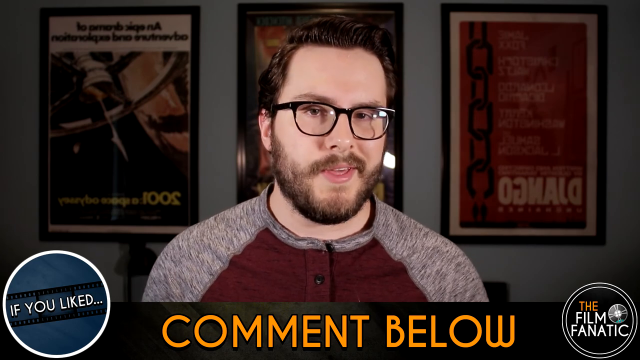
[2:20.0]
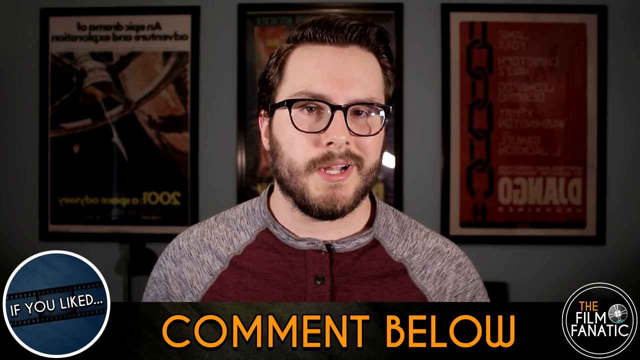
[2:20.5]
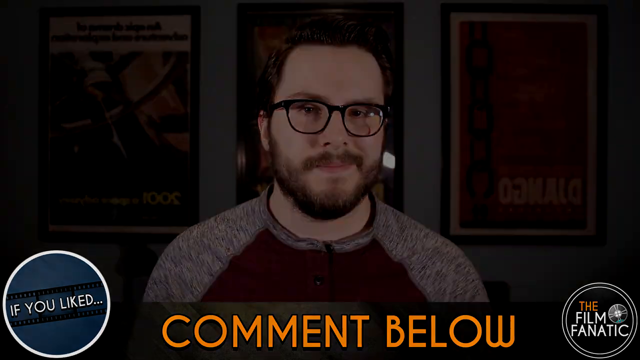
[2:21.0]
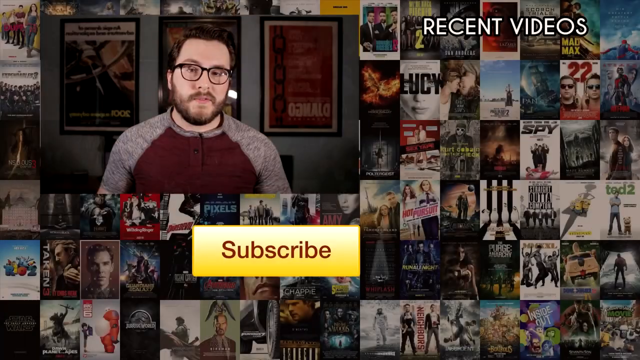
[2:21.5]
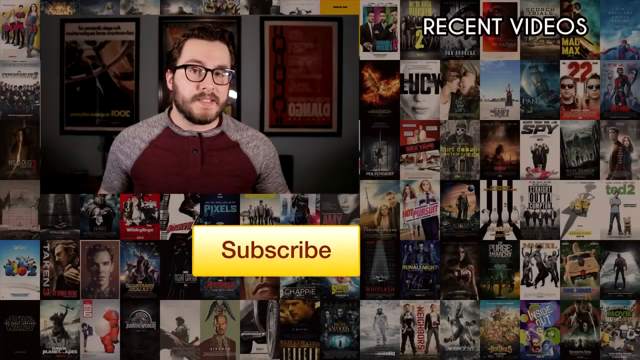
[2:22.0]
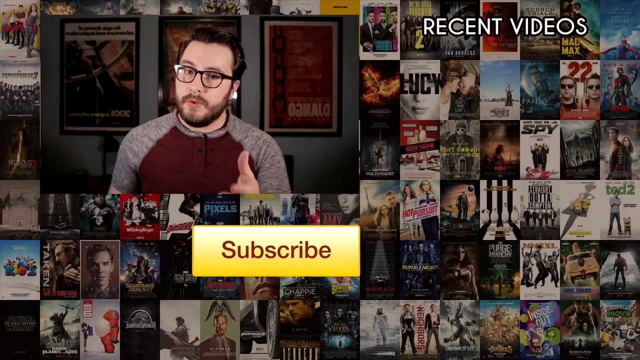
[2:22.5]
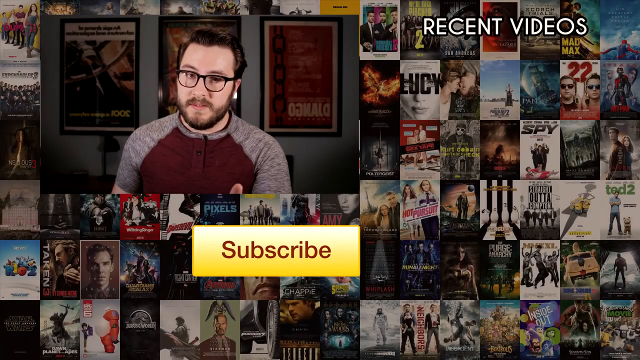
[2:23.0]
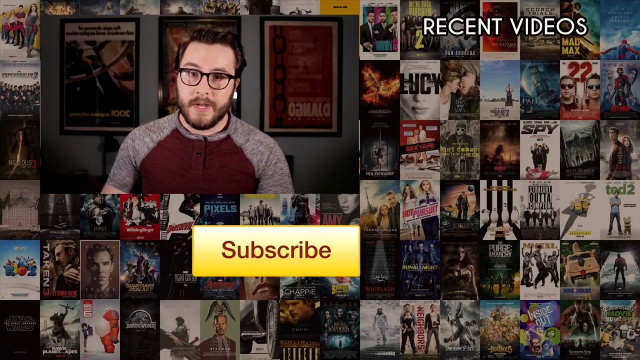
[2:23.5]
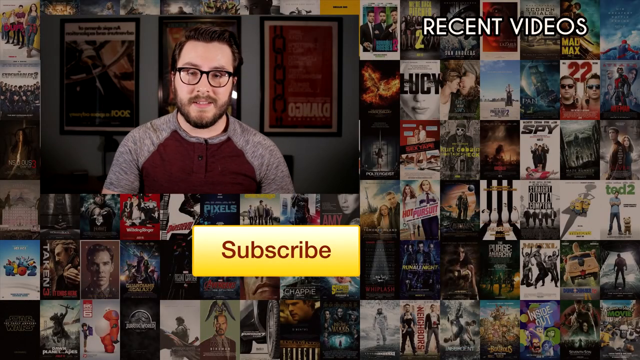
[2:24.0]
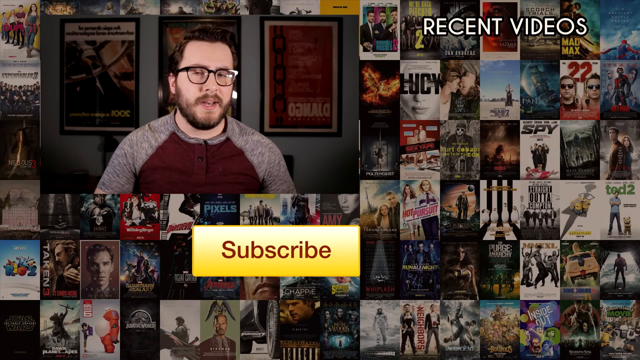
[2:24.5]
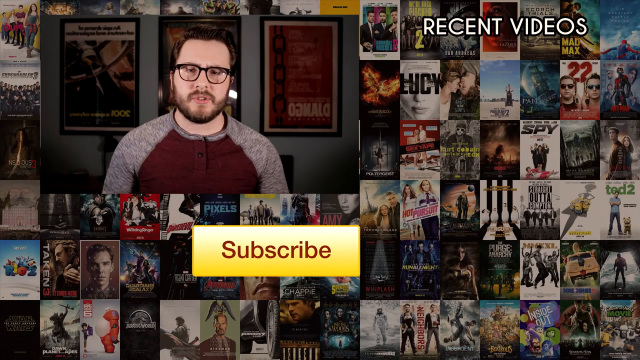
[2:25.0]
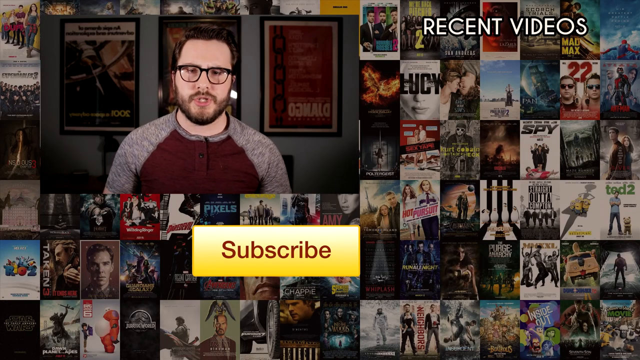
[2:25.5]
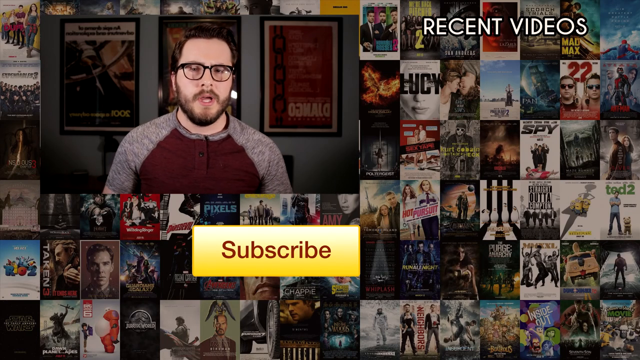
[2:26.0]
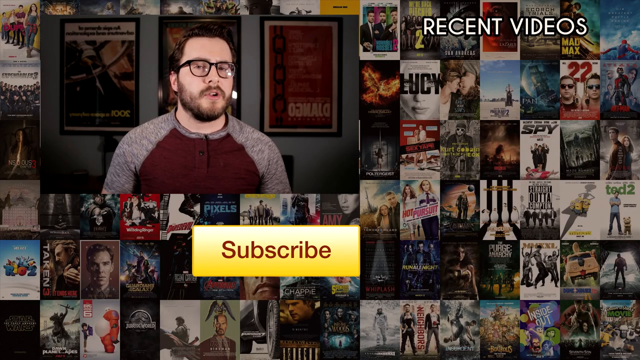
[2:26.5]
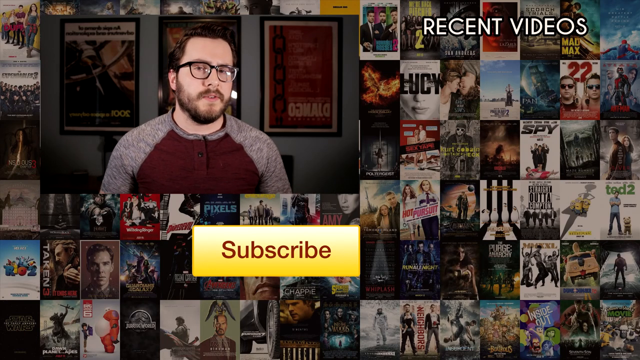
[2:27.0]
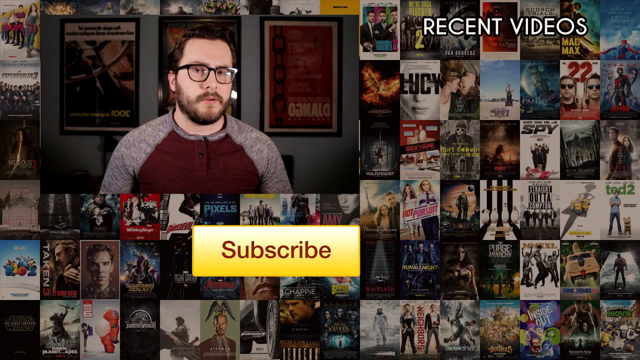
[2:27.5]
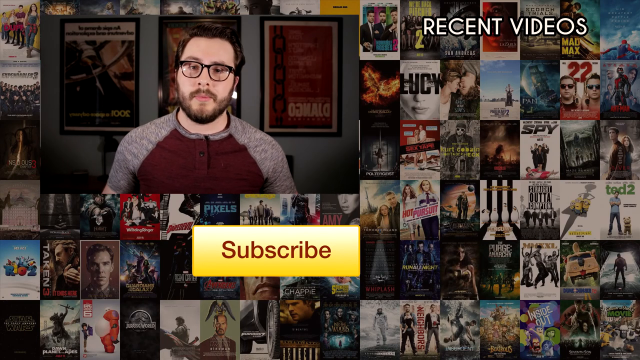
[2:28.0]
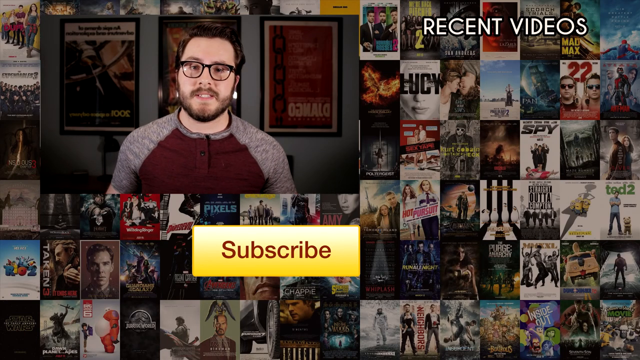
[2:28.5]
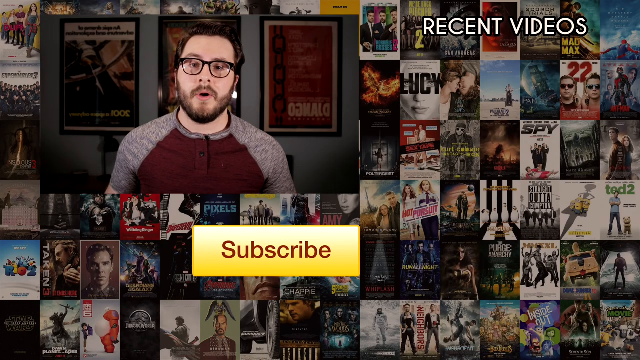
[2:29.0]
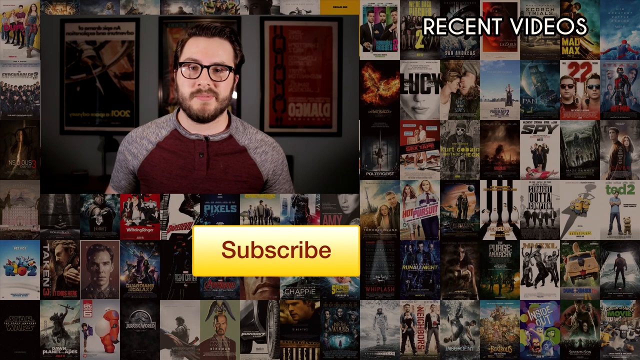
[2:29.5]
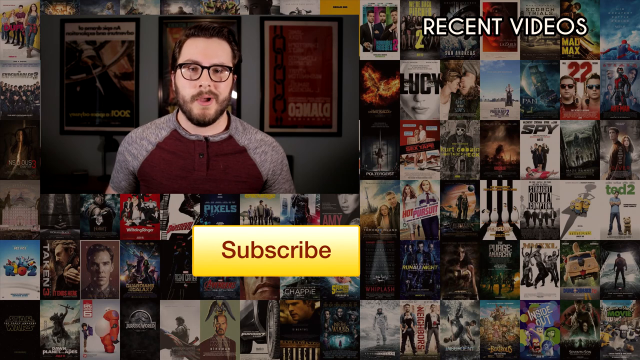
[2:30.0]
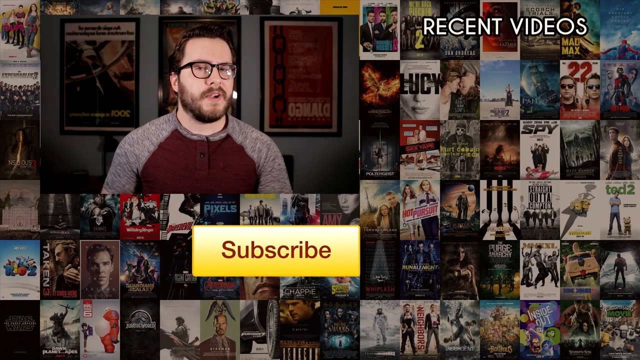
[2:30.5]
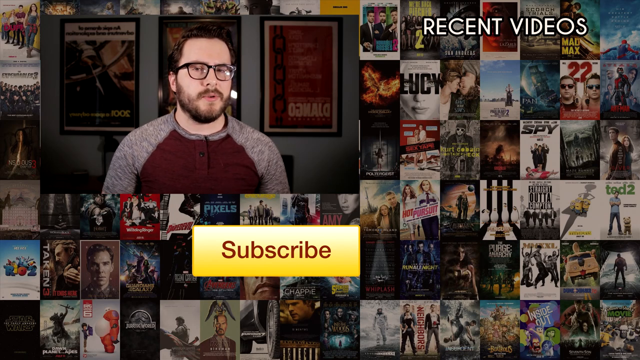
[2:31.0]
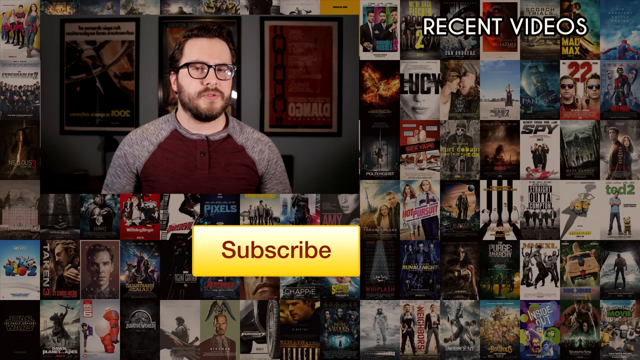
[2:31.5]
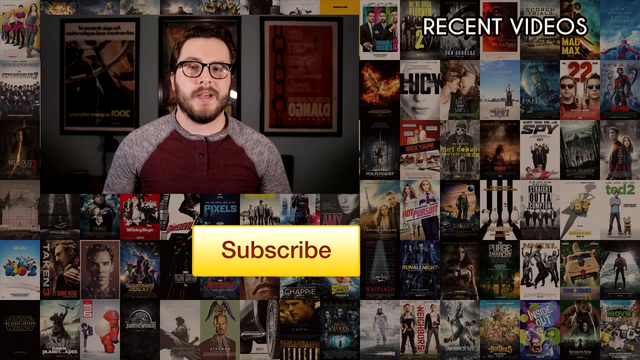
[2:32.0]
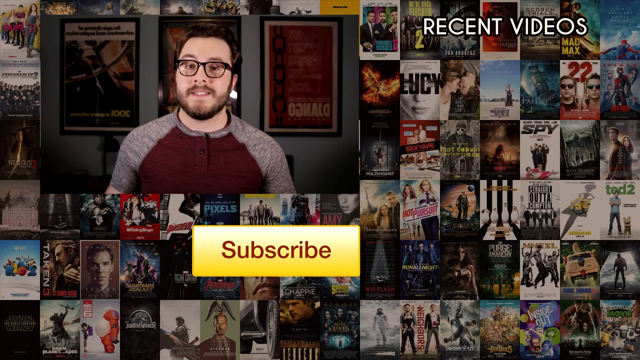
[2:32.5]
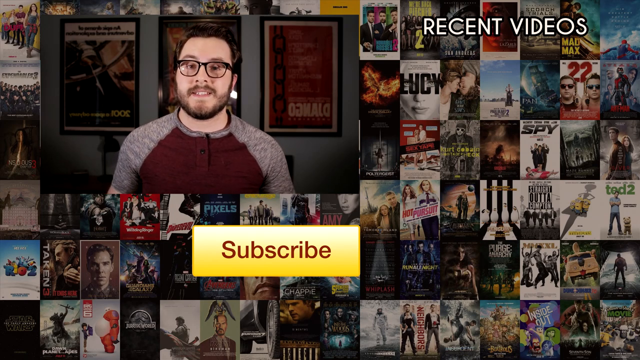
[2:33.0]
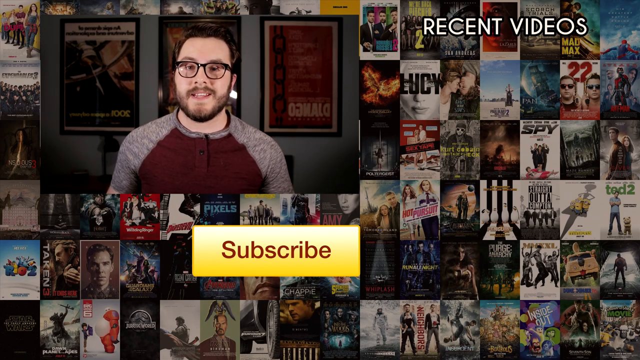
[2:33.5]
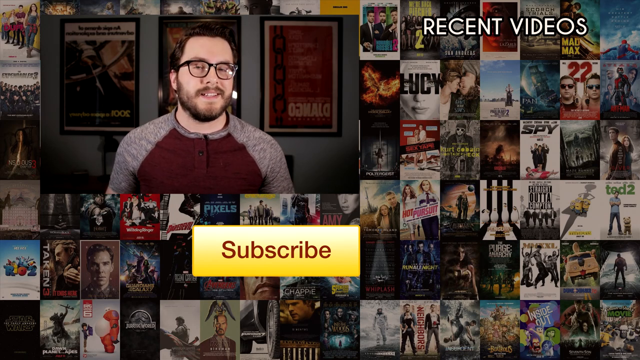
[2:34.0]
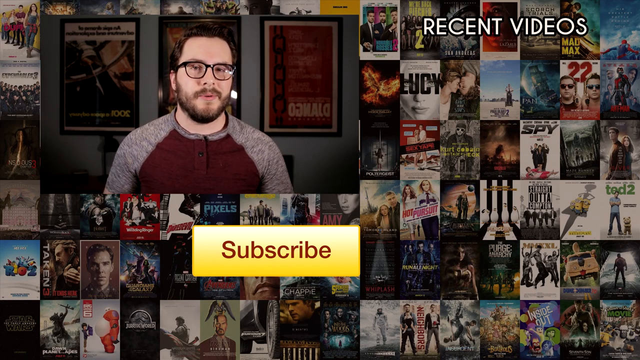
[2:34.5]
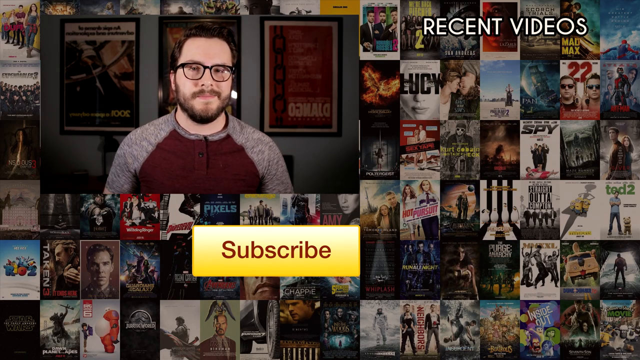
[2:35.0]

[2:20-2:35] The man continues on camera. On the right, recent videos are shown along with a large collection of movies, including Hunger Games, Lucy, Spy, Ted 2, Minions, Mad Max, Taken and Rio.